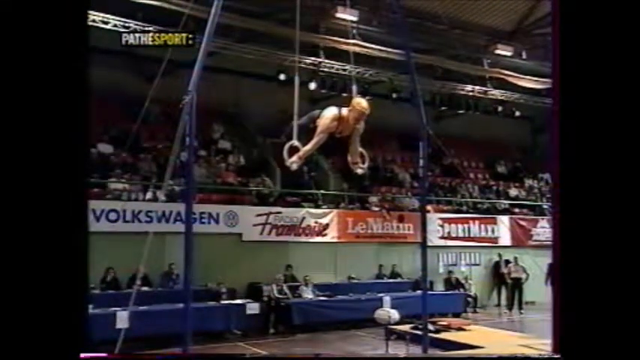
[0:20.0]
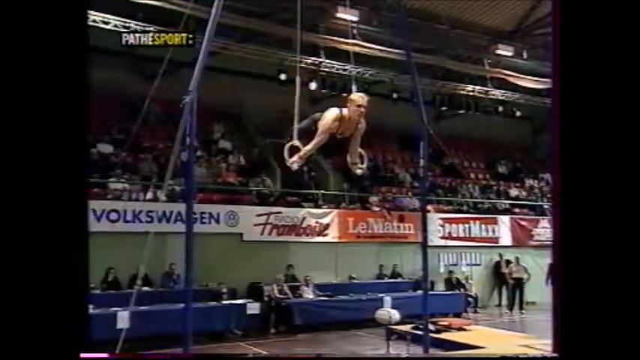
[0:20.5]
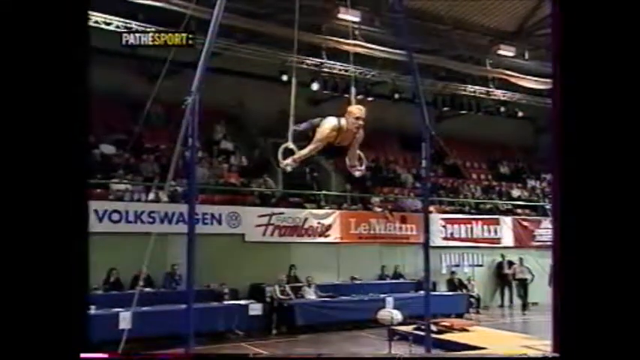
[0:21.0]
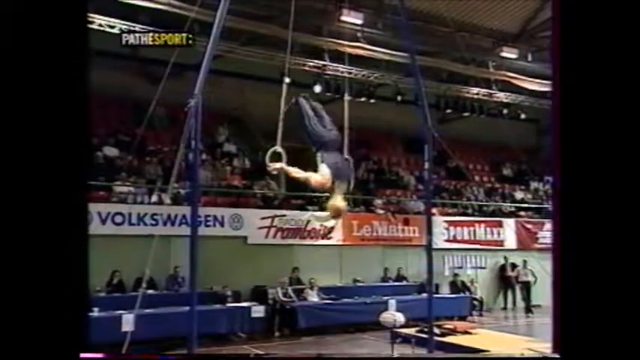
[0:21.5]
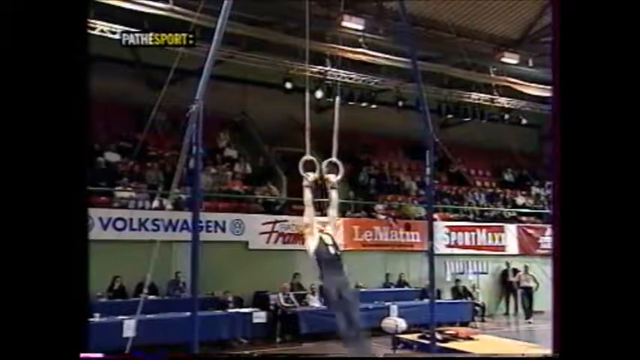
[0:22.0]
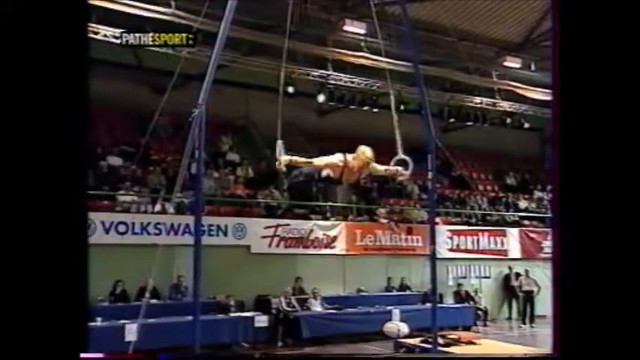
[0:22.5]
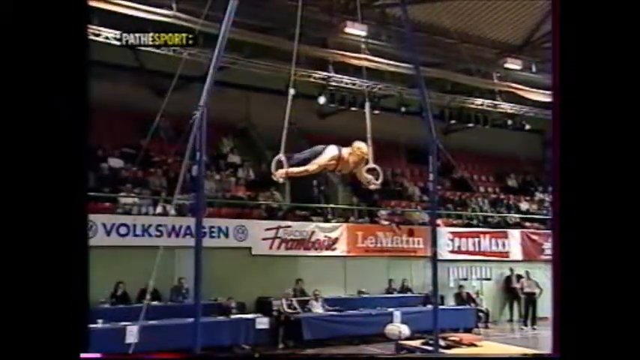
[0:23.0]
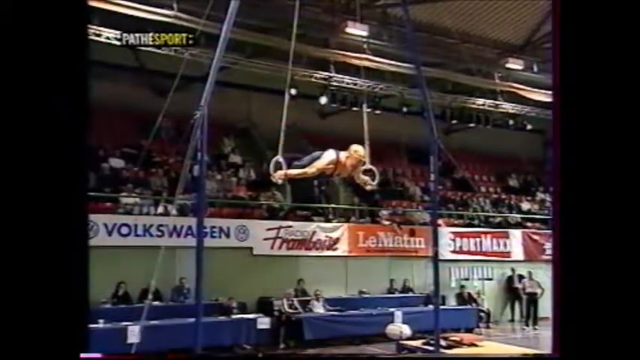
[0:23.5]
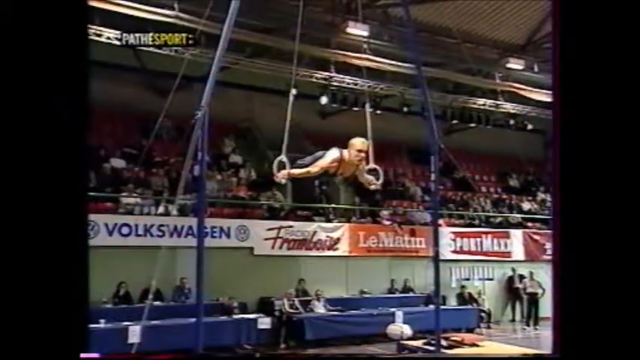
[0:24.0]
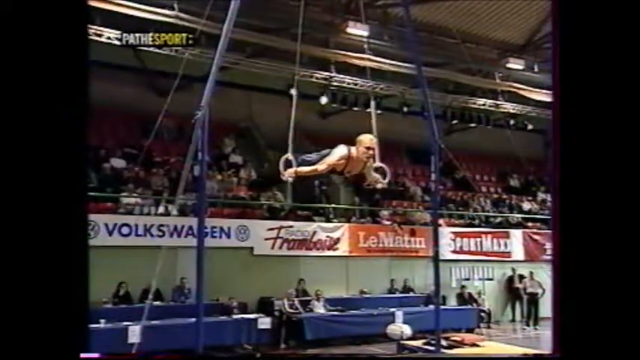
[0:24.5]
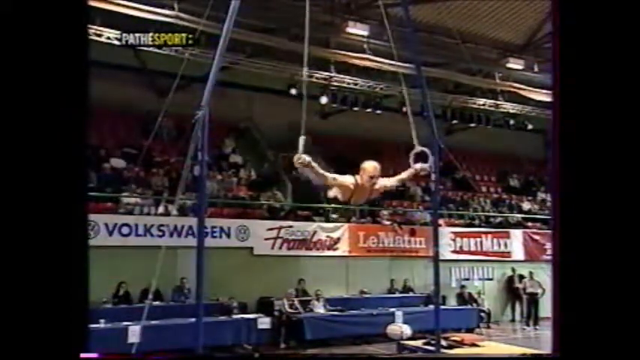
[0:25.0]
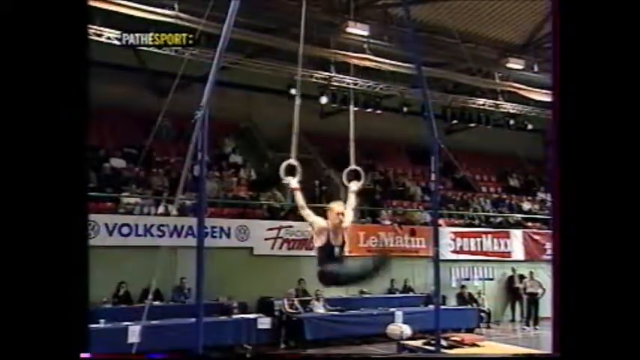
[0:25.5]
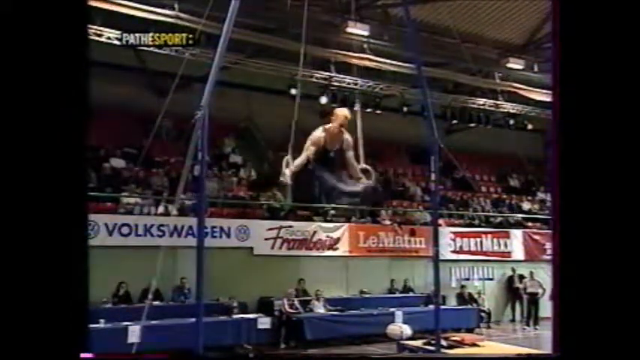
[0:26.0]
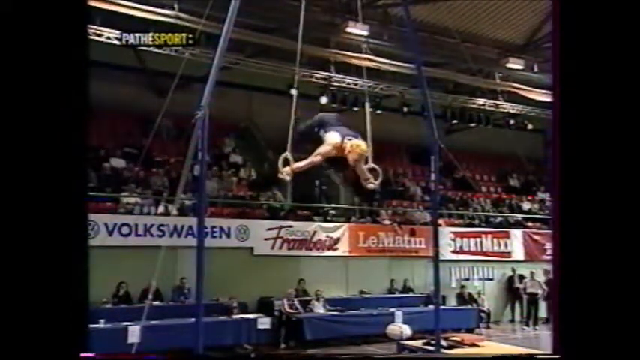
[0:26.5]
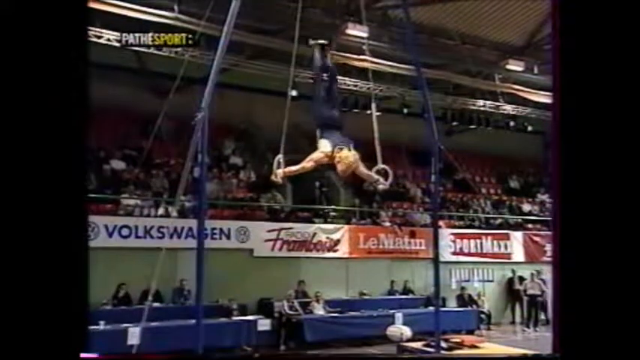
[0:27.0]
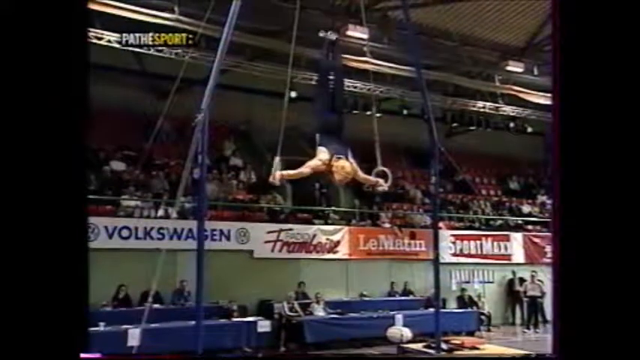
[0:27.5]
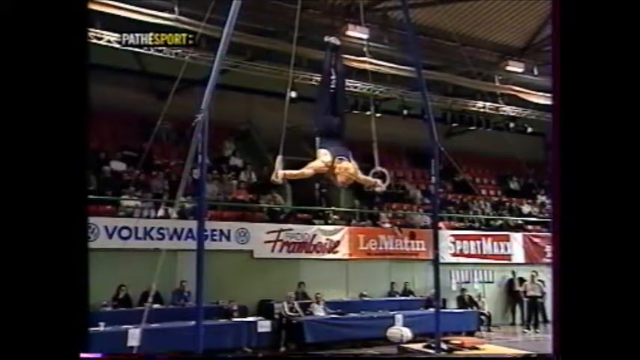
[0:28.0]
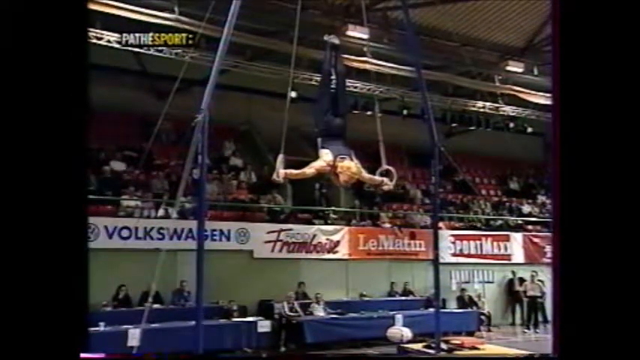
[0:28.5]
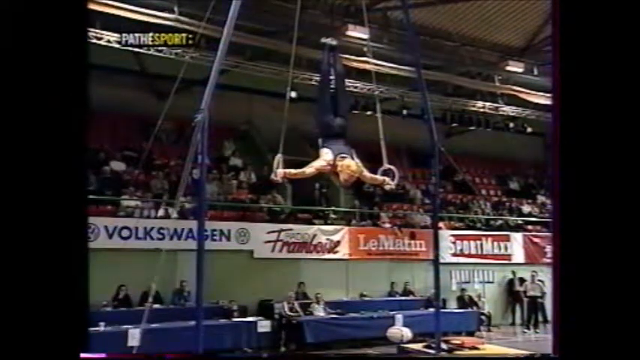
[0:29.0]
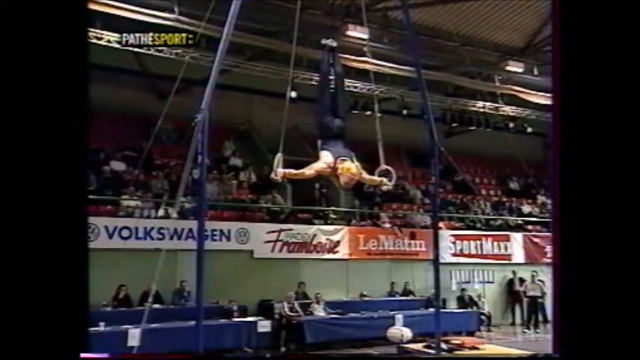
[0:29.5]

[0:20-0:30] The same gymnast is seen from a different, more up-close angle in the same gymnasium. There are more empty red seats, and the view faces the judges: about eight of them sit at tables behind the gymnast, and a couple of people stand around watching as well. The judges are on the main floor, while the spectators are elevated in seats. Advertisements include Volkswagen in blue on a white background, "Radio Framboise" in red on white, "Le Matin" in white on an orange background, and "Sport Maxx" in white lettering on a red background. The gymnast, in his early 20s, has a very muscular build, blondish reddish hair, and a navy outfit that shows his muscles. Holding the rings, he is at a 90-degree angle; he looks up, flips around, and his legs go down while he still holds the rings. He pulls himself up to a perpendicular 90-degree angle again, his legs come down, and he flips back up with his legs up in the air.